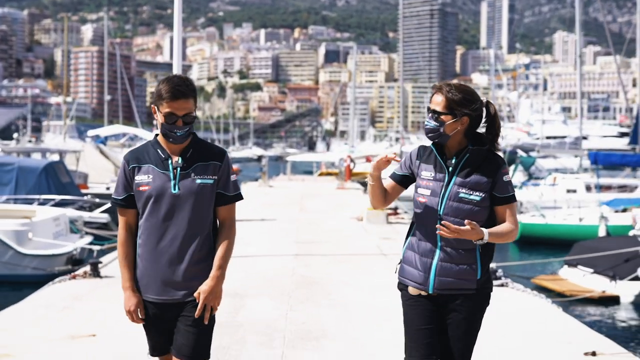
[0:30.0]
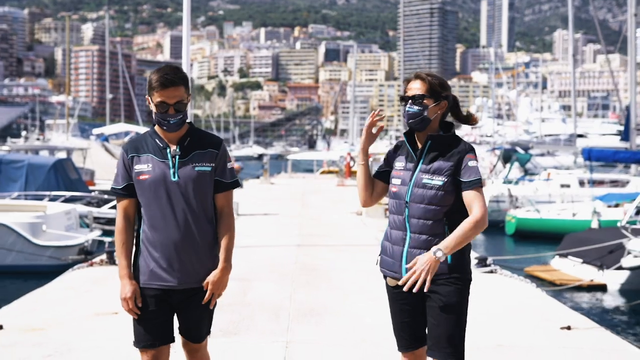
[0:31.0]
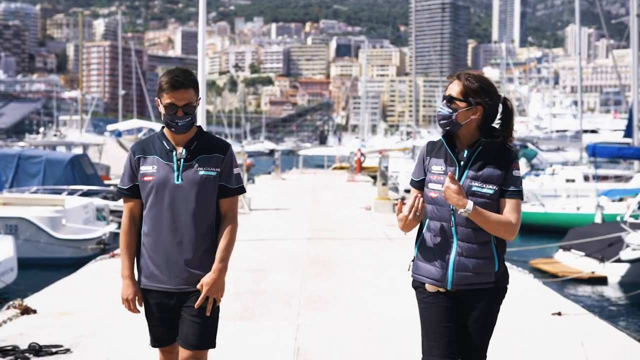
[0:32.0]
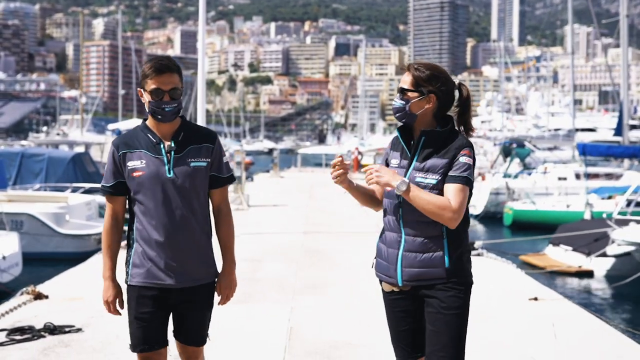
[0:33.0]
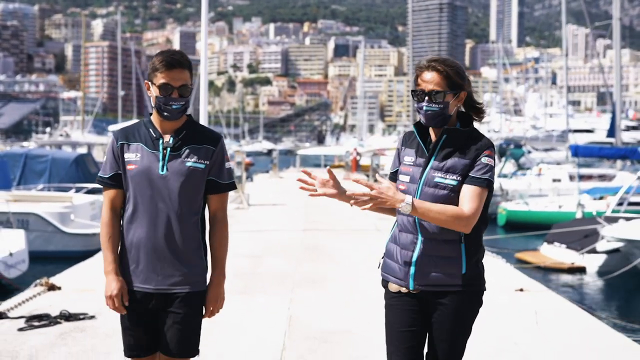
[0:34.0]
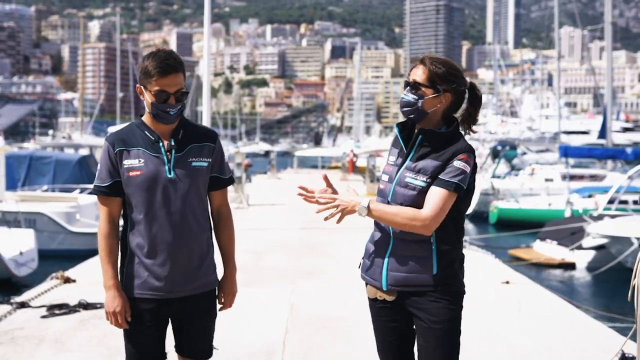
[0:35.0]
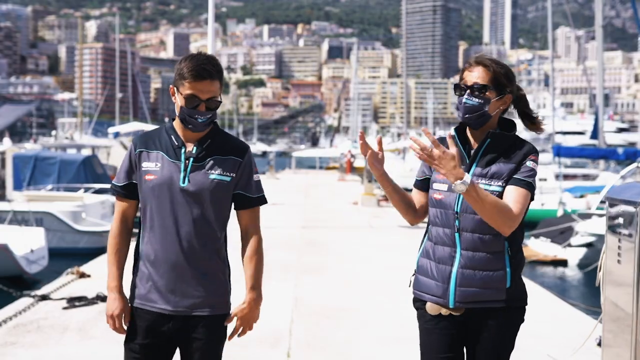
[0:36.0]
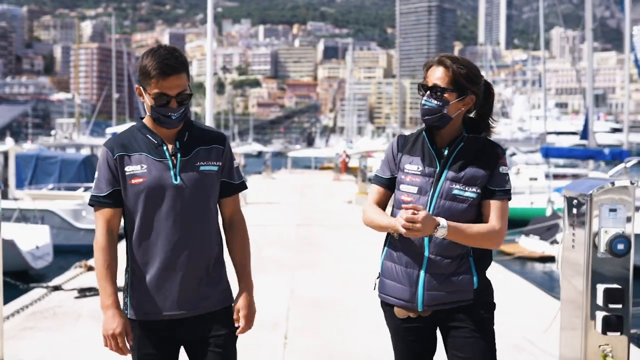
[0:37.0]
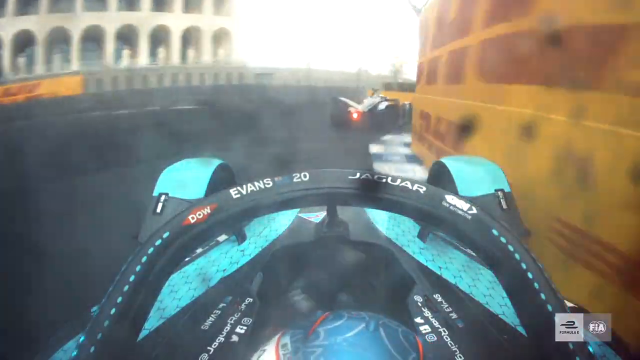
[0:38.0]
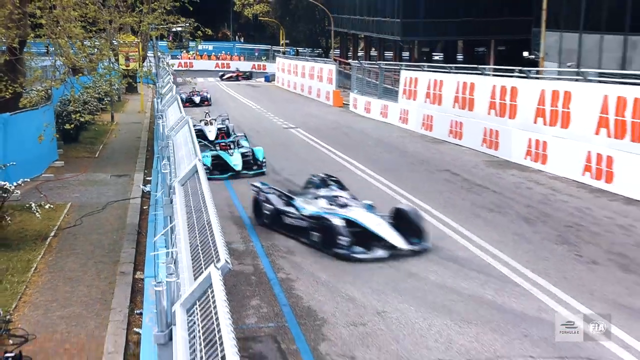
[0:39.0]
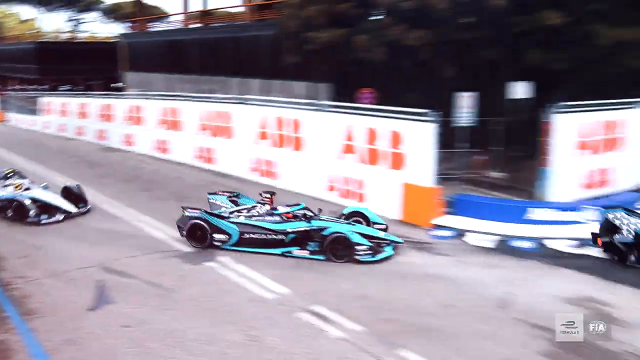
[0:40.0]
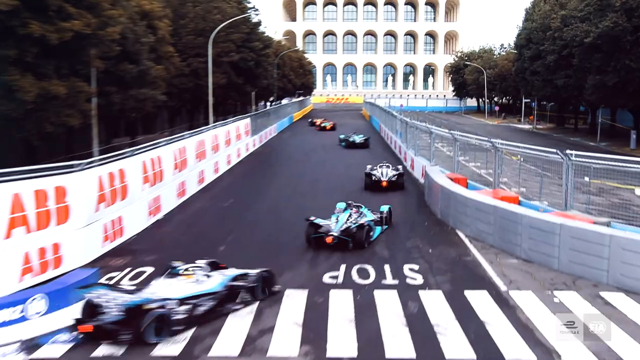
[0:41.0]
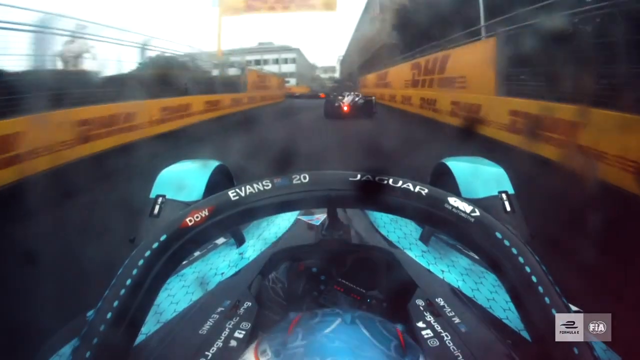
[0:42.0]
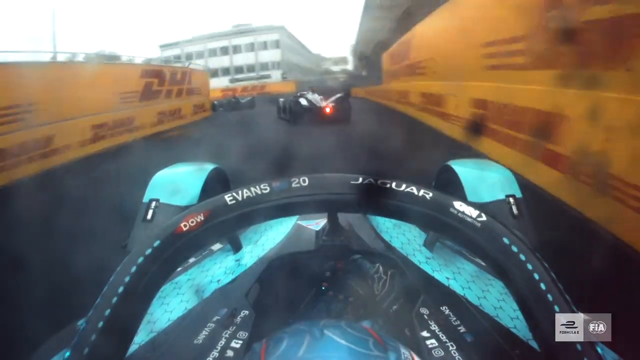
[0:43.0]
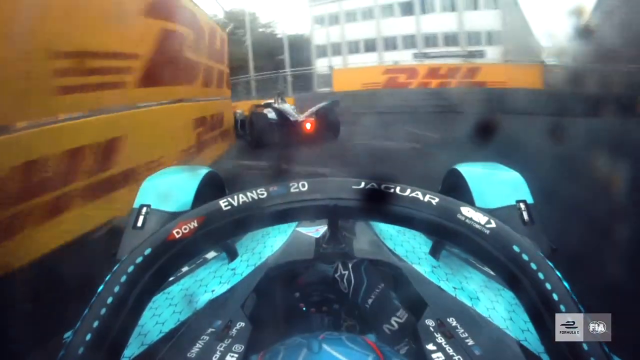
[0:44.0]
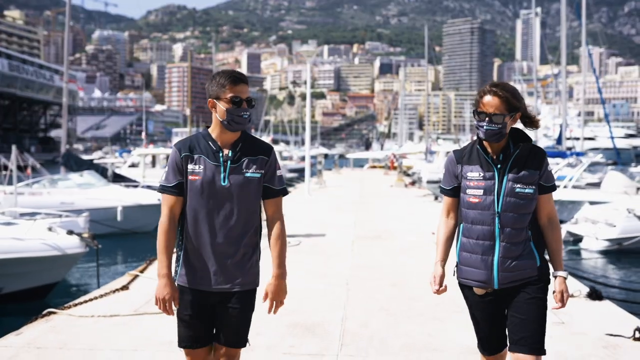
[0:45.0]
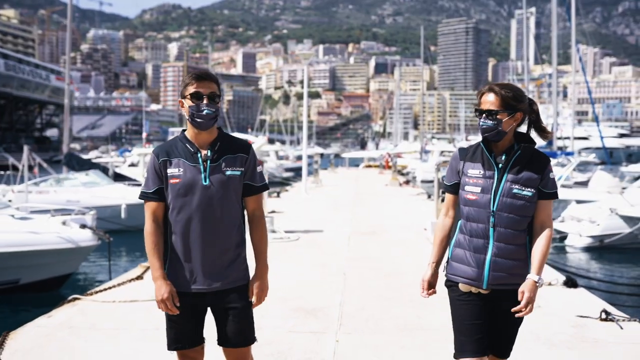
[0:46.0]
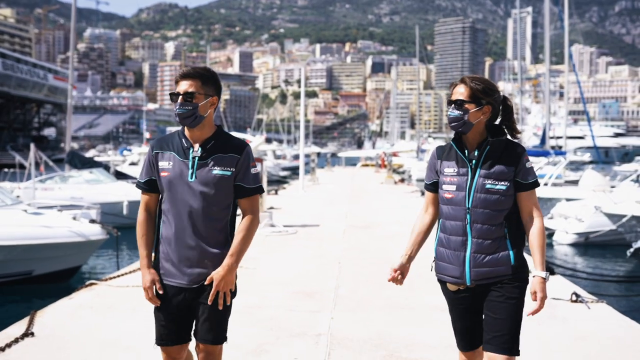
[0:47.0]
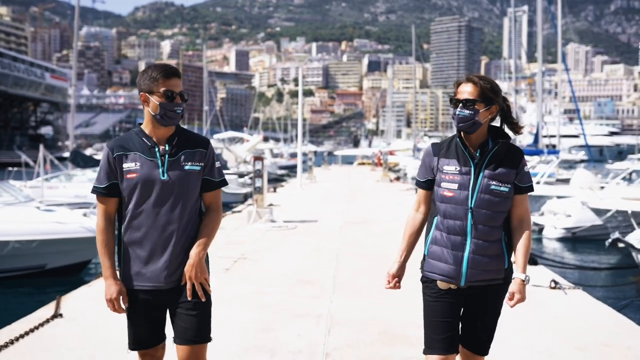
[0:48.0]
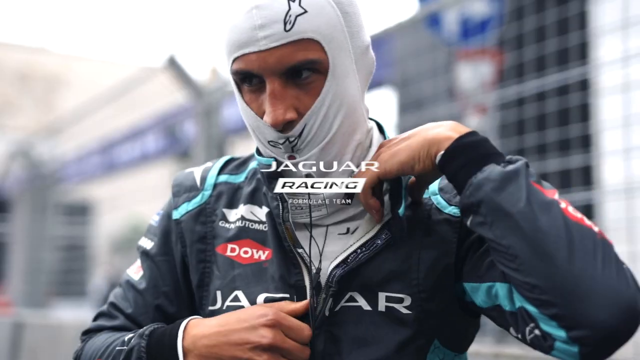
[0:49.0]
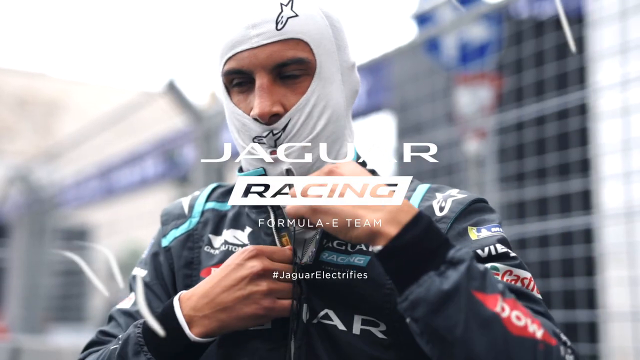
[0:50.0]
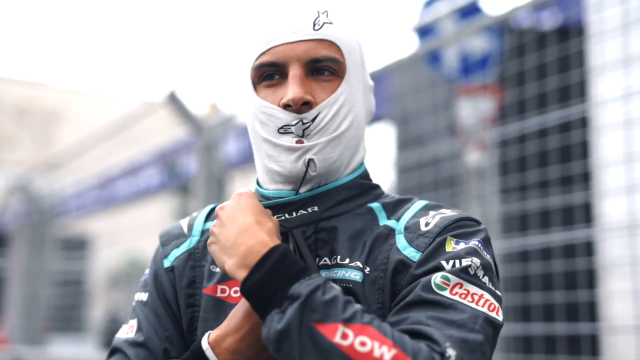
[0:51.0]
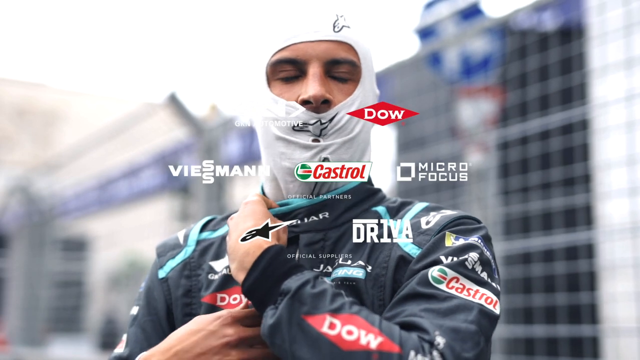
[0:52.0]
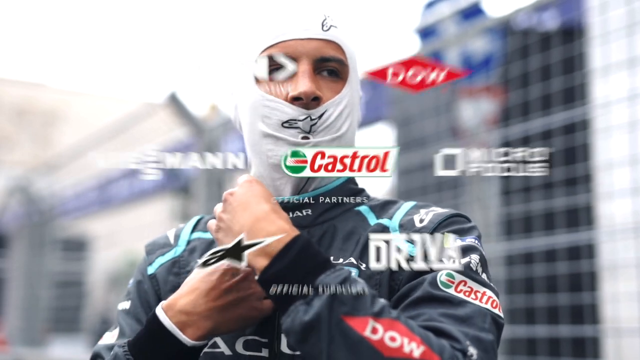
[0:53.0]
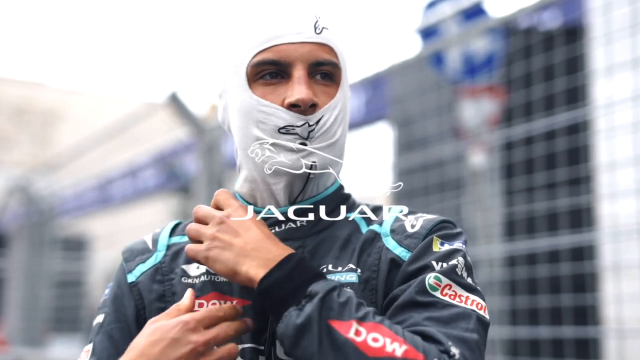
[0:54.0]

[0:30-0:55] A man and a woman talk to each other; both wear dark blue clothing and masks. The scene quickly transitions to what appears to be many race cars racing down a track. As they race, the video transitions to a scene with the text "Jaguar Racing", showing a man putting on a white head cover as the scene changes. In the background are buildings of various colors and heights in the Monaco area shown on screen. It is bright daylight, and it looks like very warm weather.